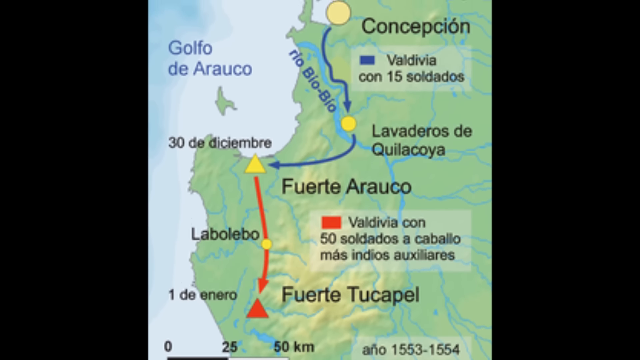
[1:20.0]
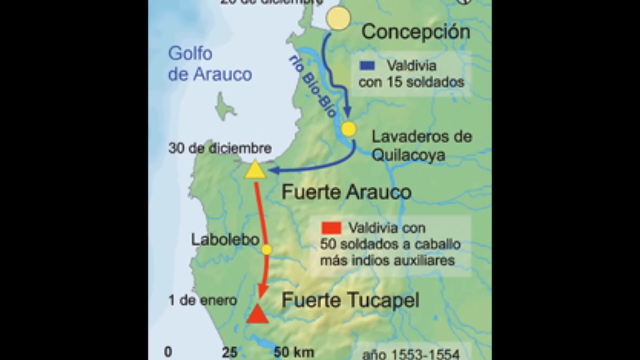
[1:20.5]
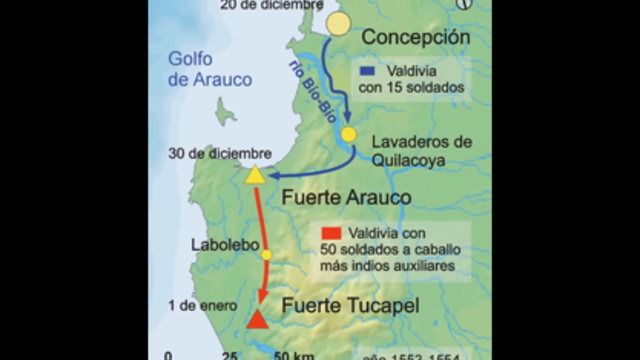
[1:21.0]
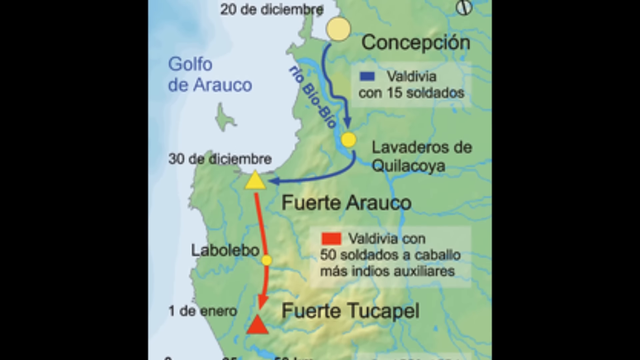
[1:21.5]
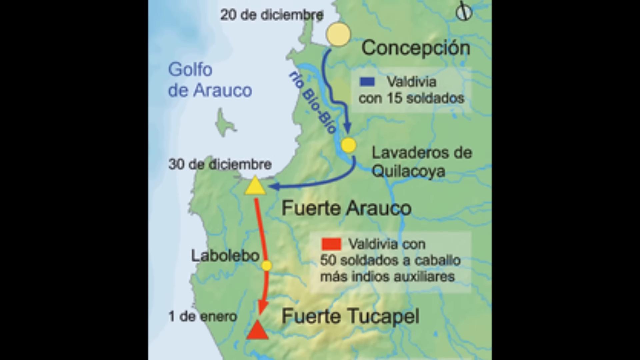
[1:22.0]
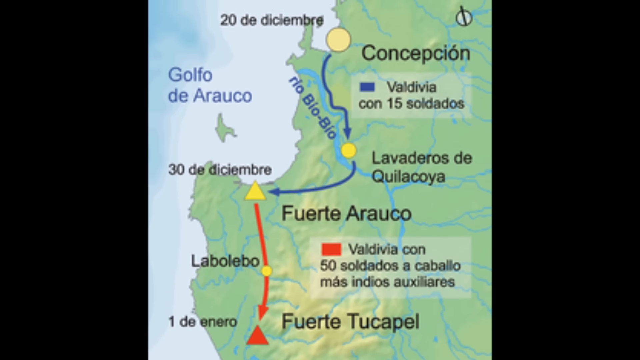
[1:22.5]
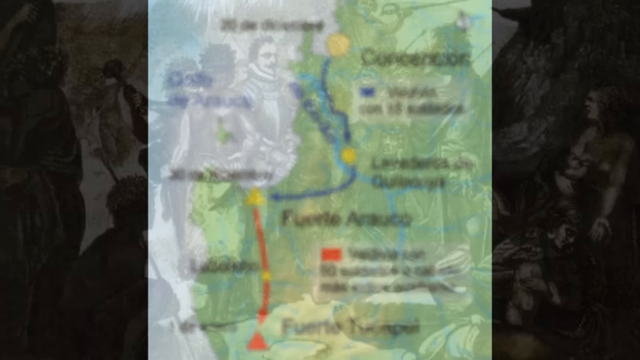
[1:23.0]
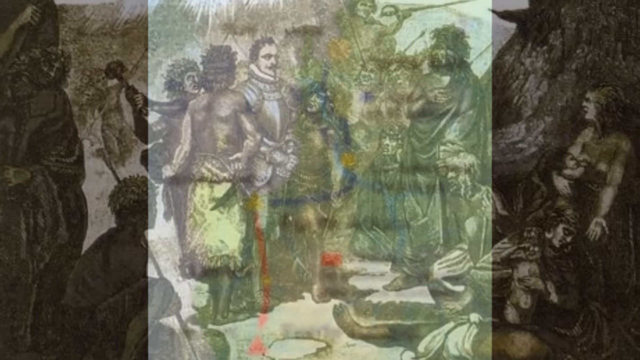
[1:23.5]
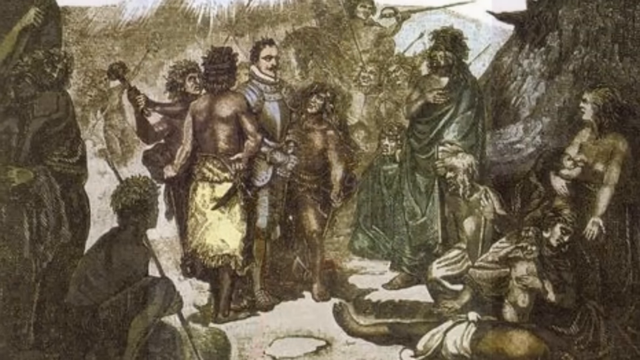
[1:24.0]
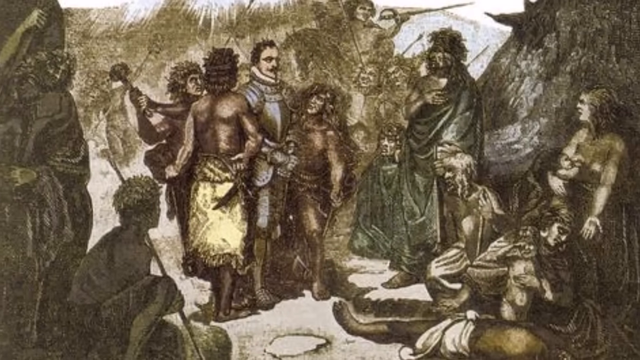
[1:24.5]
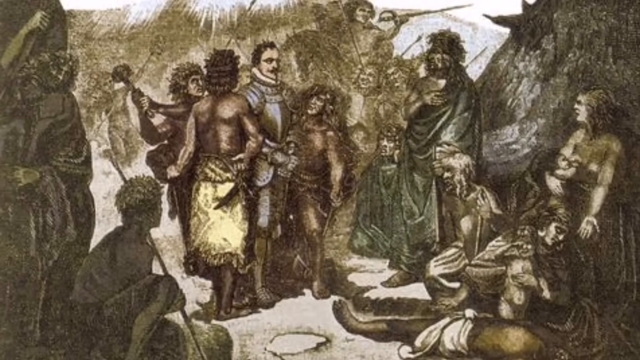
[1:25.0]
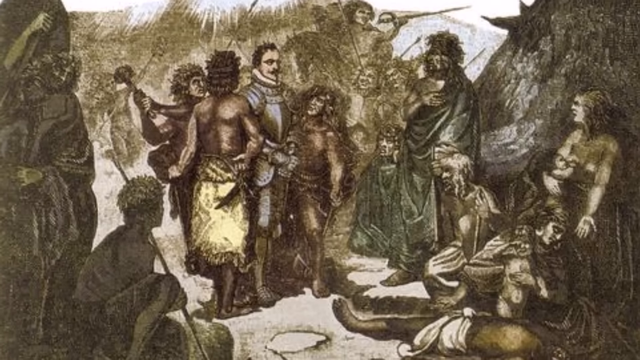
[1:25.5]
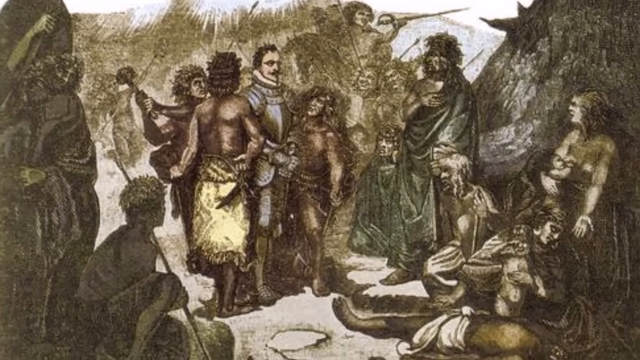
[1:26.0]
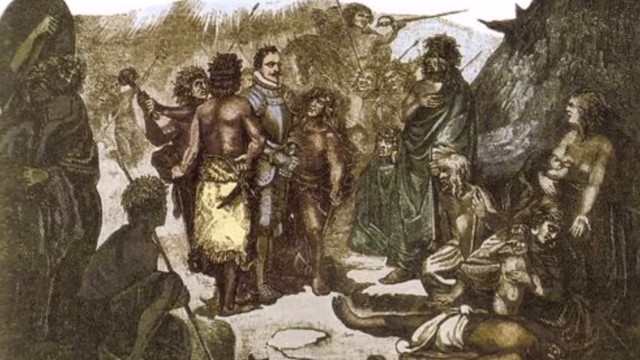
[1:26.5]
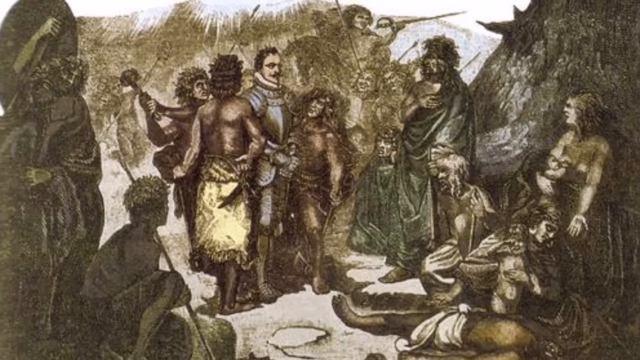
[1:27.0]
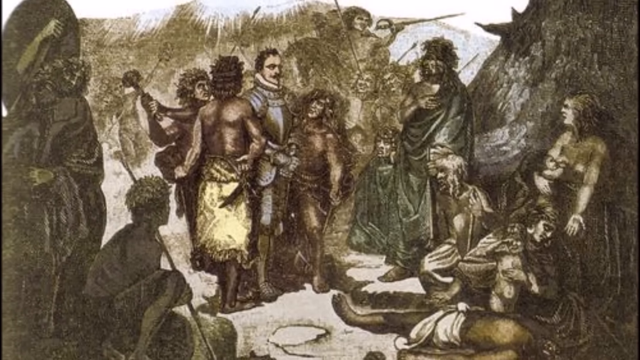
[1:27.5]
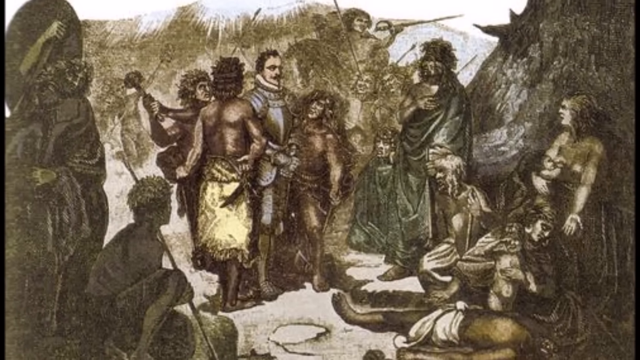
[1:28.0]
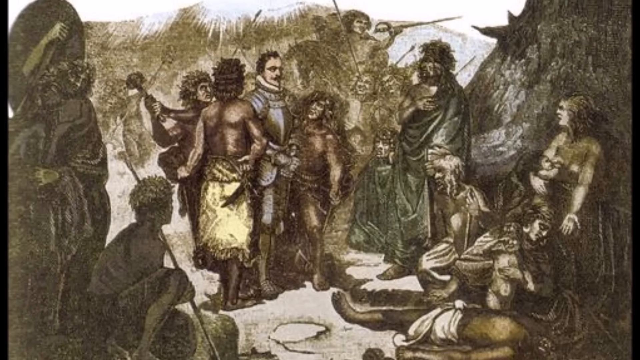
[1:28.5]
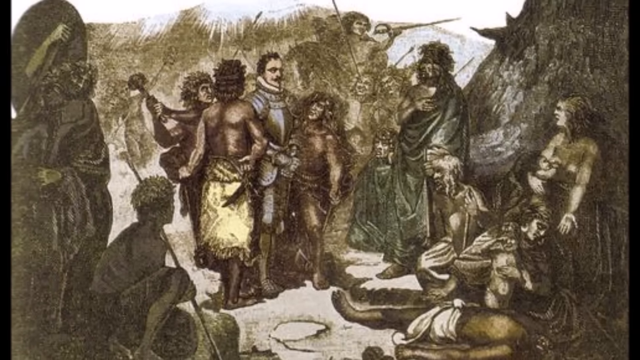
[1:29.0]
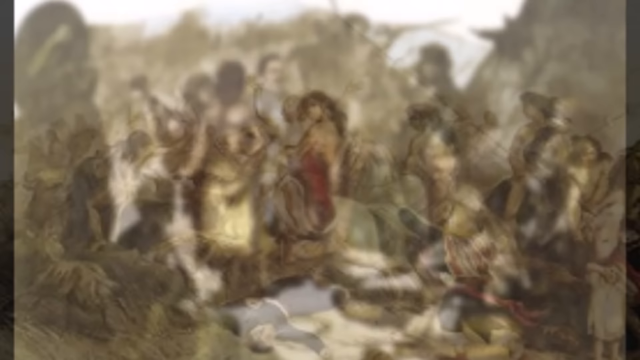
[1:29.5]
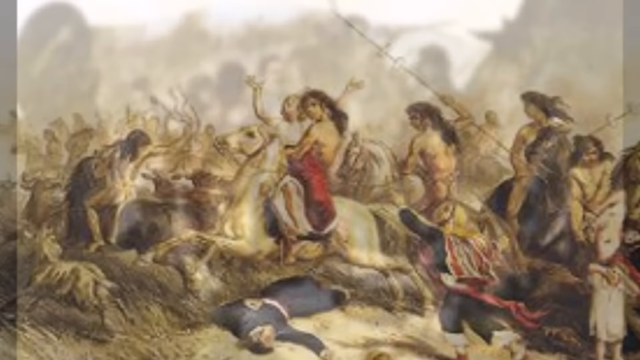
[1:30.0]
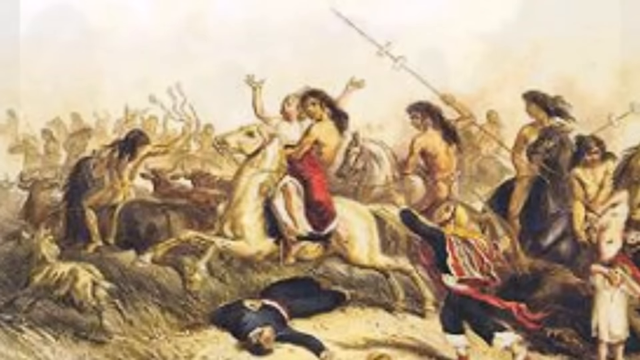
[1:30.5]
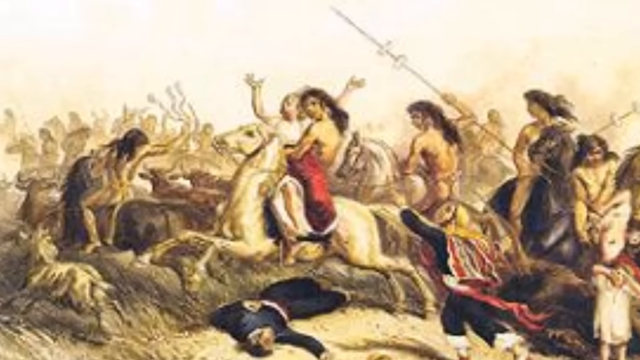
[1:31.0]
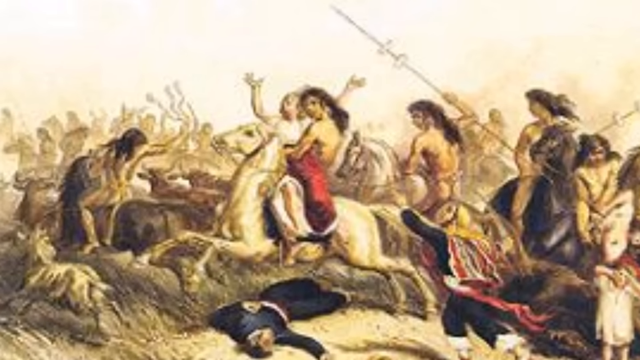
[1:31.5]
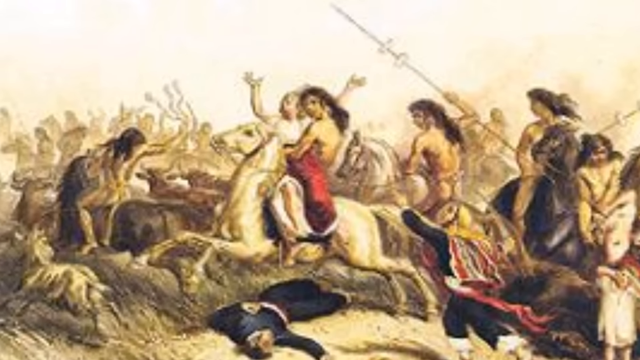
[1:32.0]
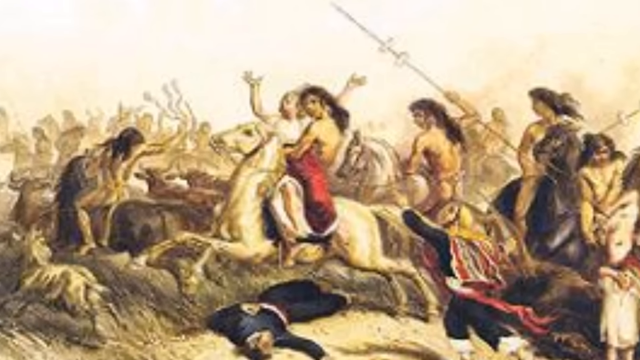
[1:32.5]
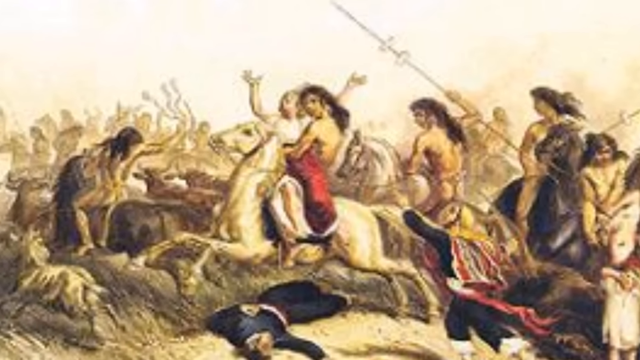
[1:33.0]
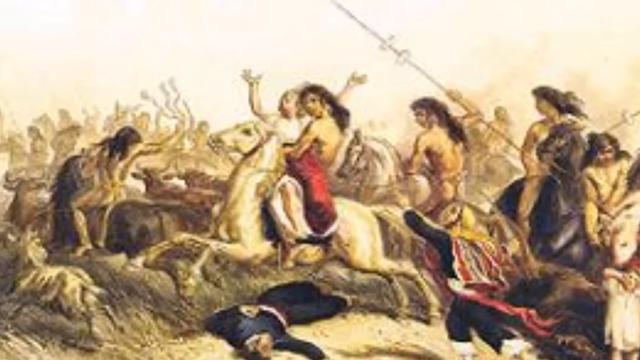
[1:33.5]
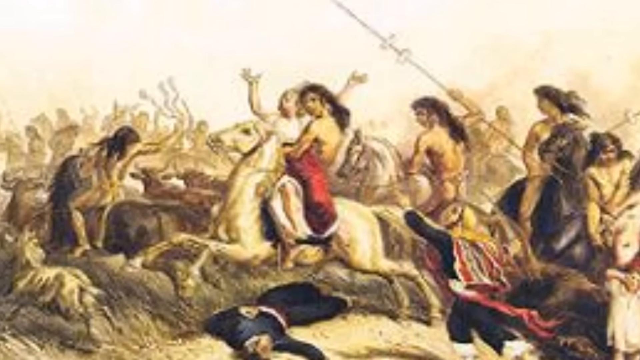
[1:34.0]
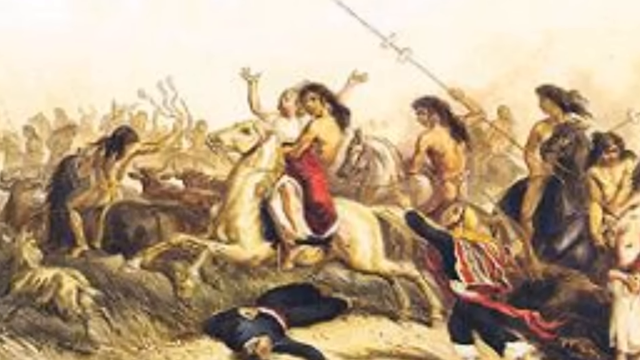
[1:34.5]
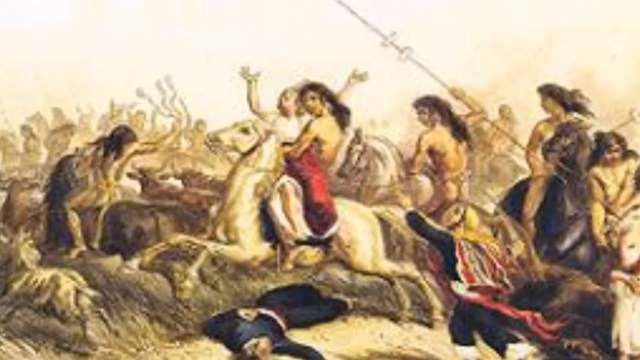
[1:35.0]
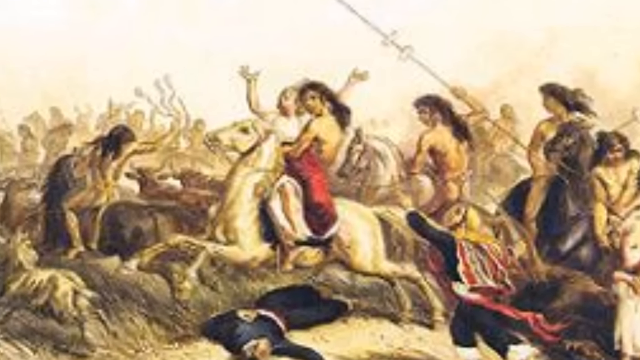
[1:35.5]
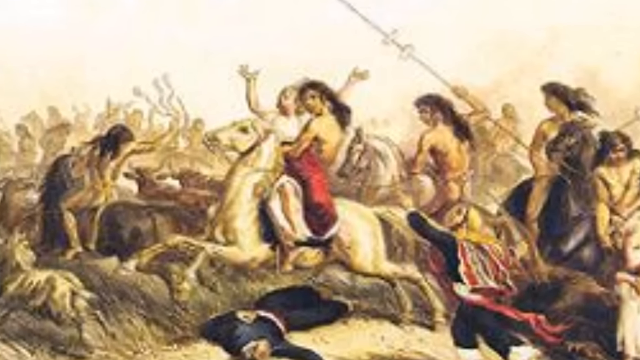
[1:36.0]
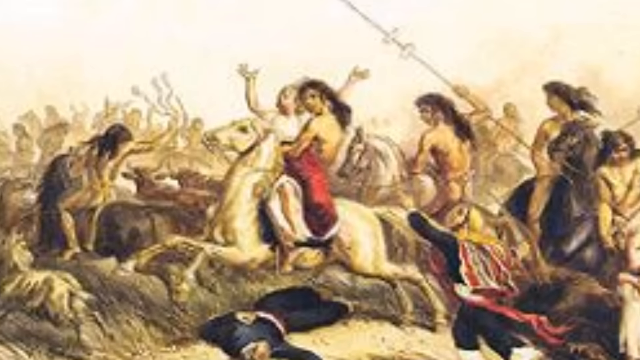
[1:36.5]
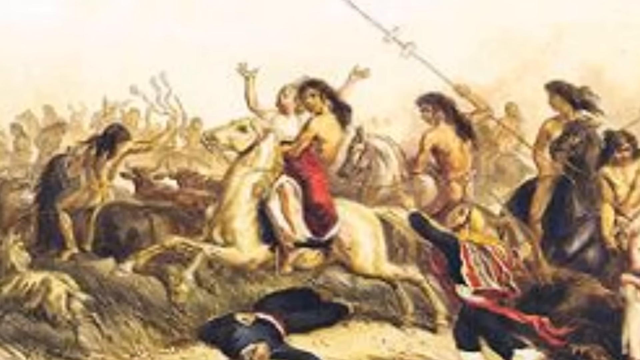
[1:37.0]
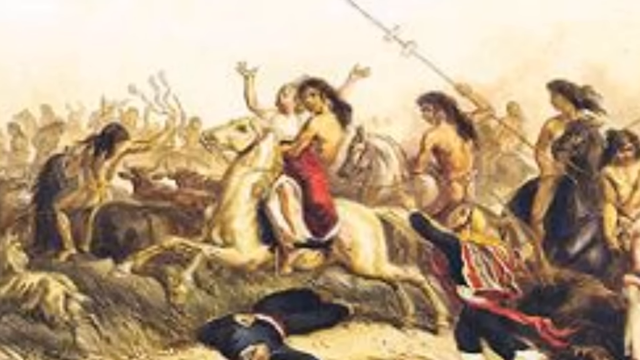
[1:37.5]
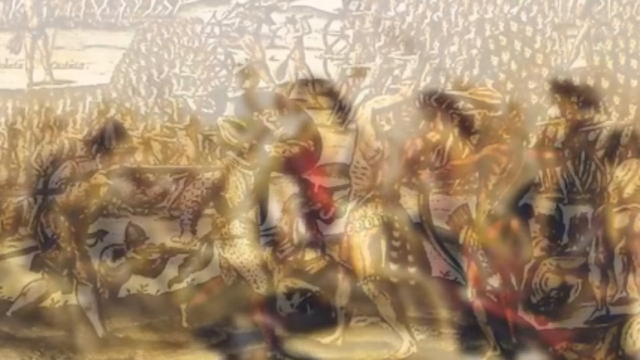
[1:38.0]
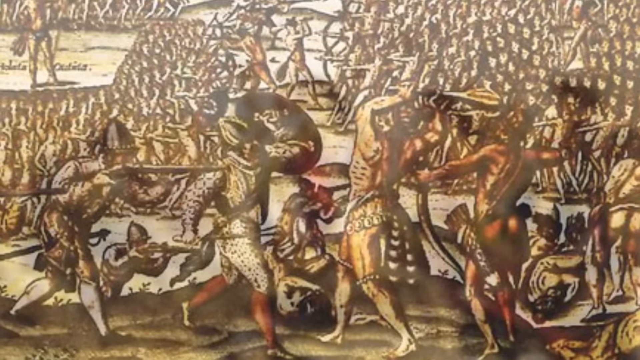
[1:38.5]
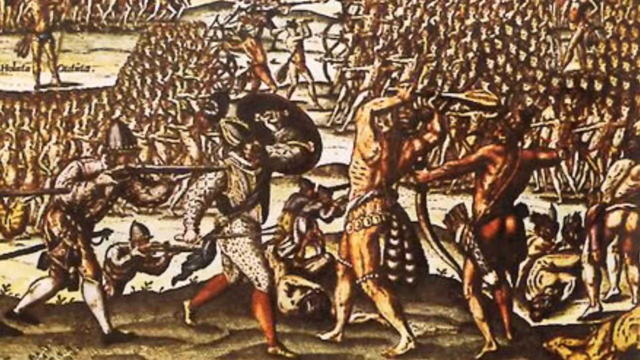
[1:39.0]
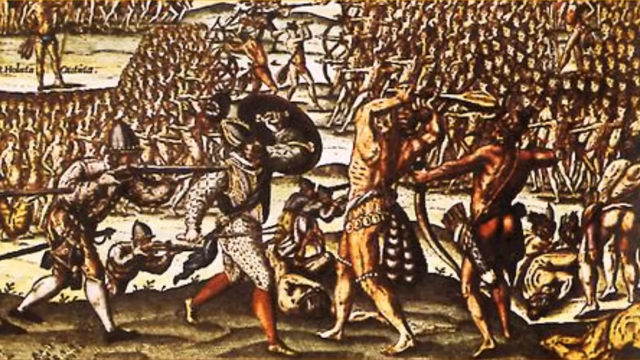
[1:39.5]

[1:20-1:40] War number 3 is Spain's conquest of the Inca Empire in Peru and Ecuador. Spanish troops are shown marching south from Colombia and then heading into the mountains. An image follows of 16th-century Spanish troops talking to Indians dressed in some form of fabric, and then the Indians are shown riding horses.